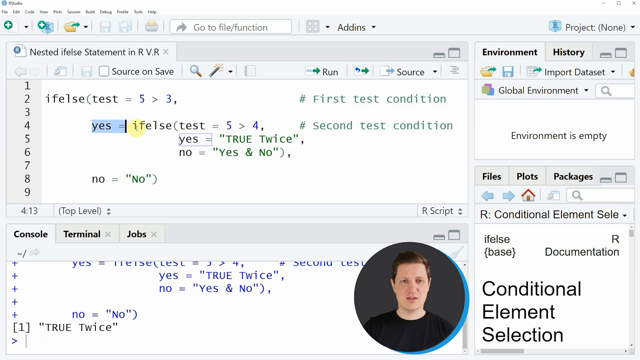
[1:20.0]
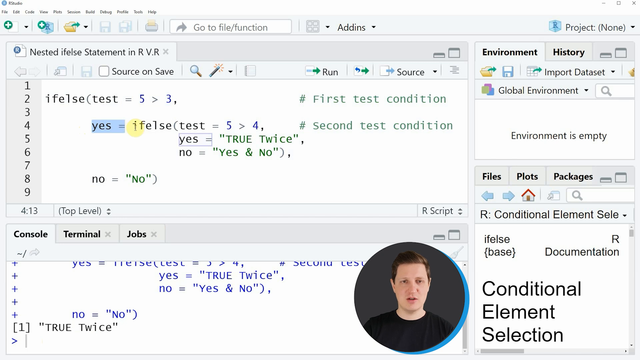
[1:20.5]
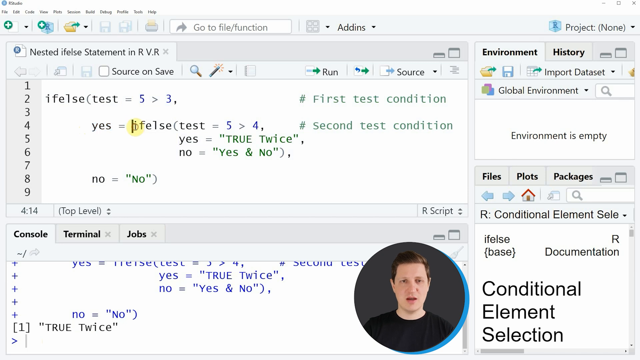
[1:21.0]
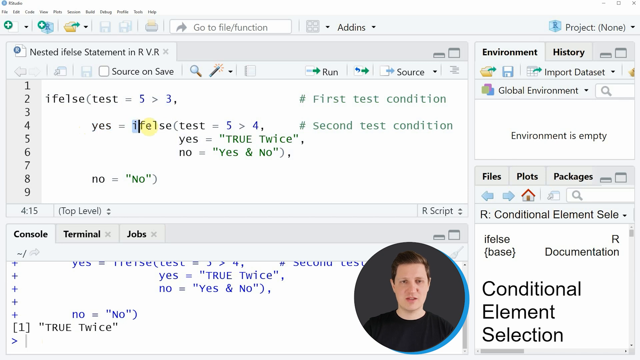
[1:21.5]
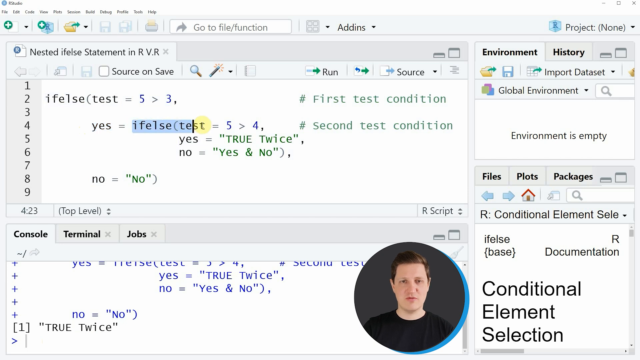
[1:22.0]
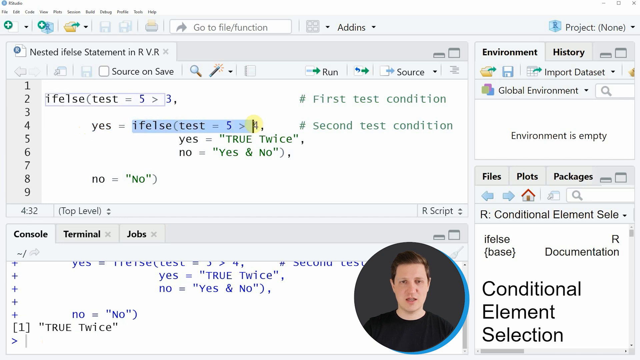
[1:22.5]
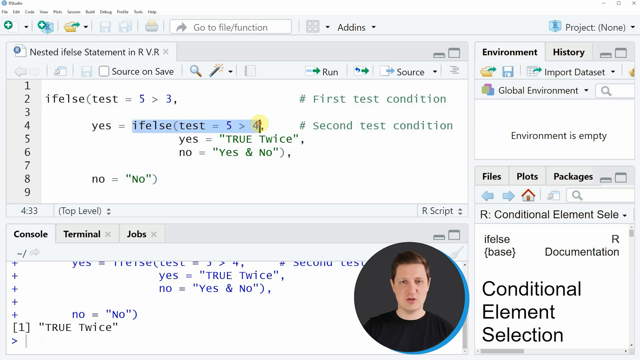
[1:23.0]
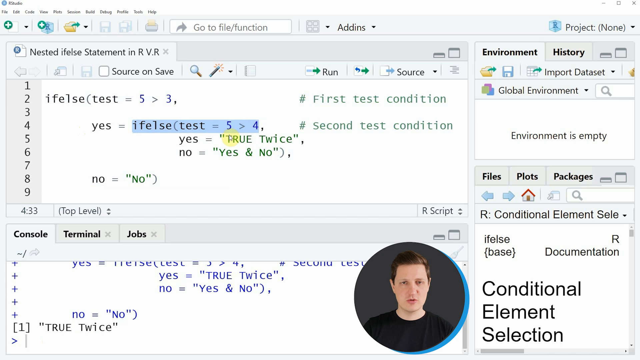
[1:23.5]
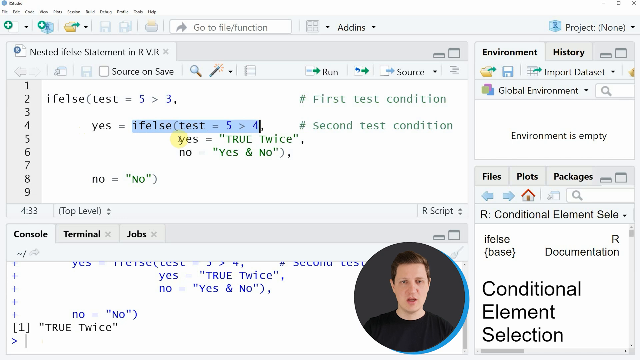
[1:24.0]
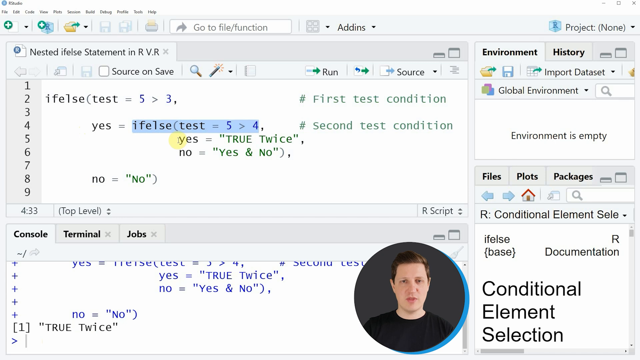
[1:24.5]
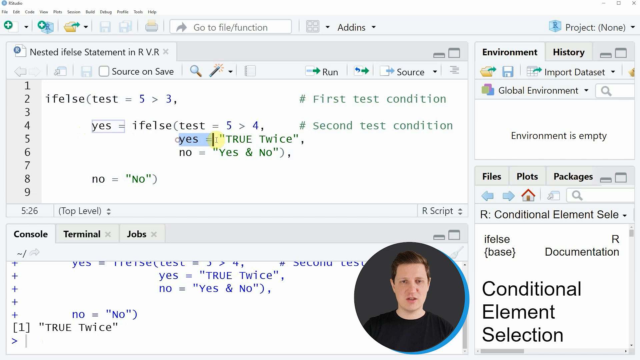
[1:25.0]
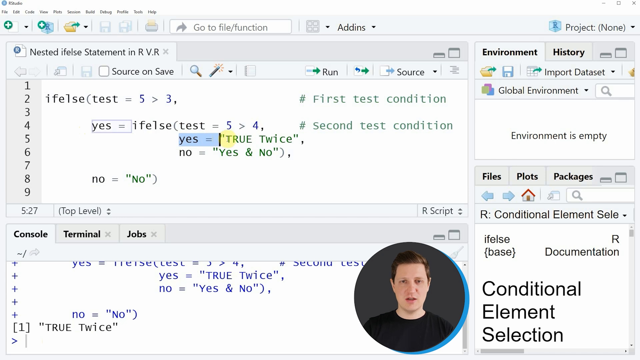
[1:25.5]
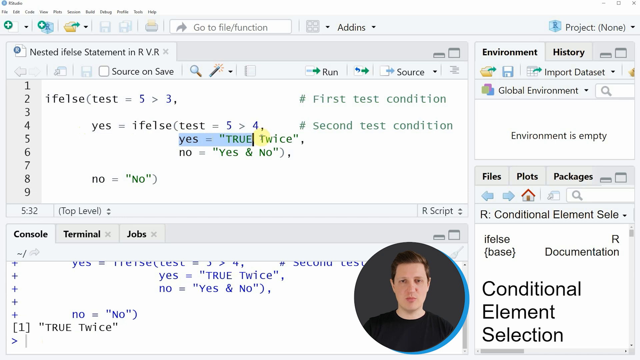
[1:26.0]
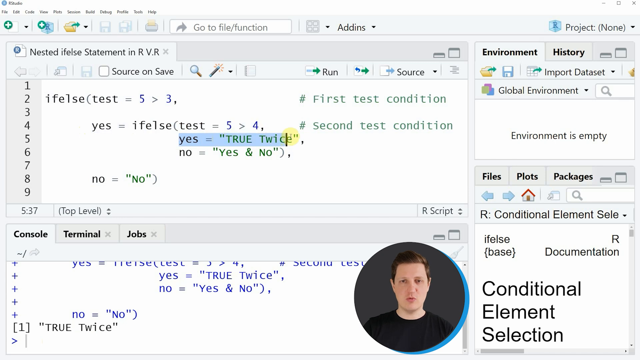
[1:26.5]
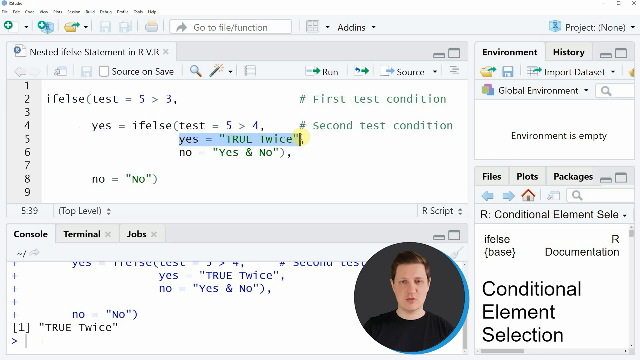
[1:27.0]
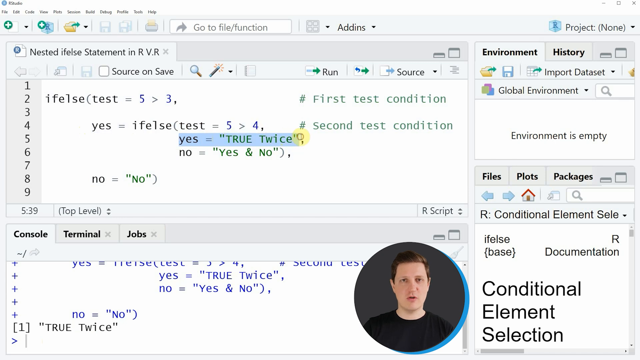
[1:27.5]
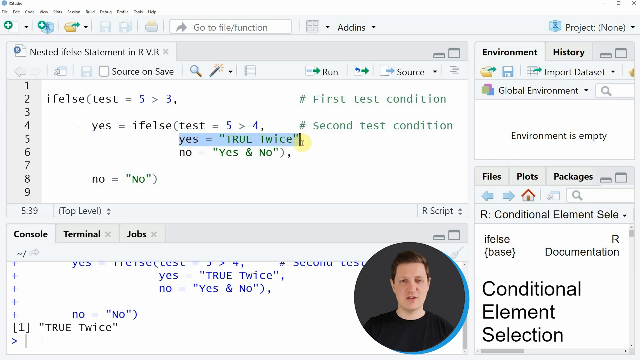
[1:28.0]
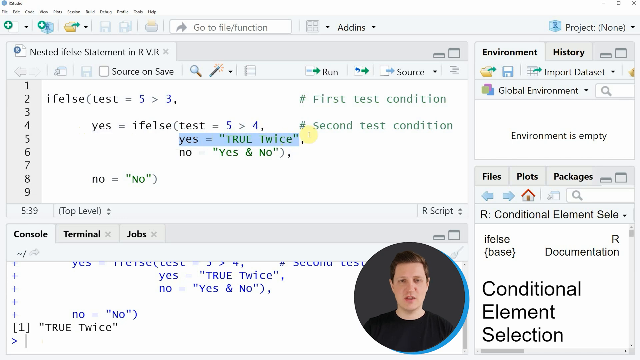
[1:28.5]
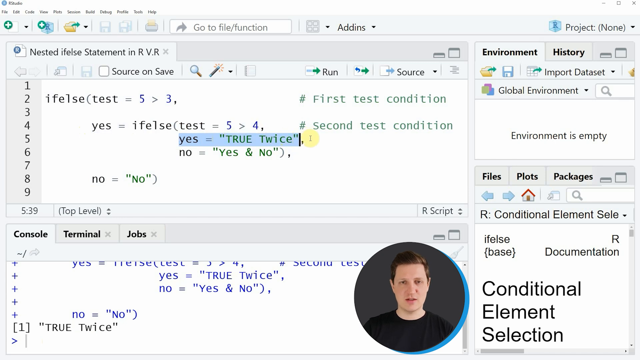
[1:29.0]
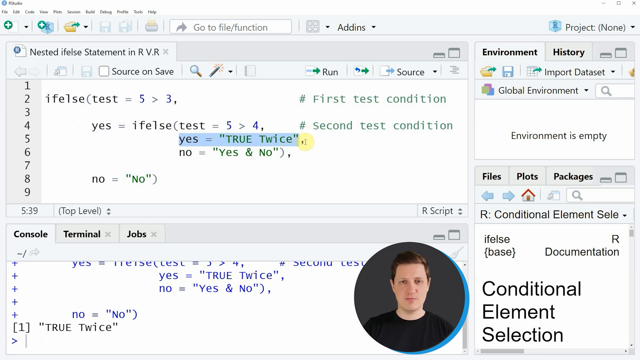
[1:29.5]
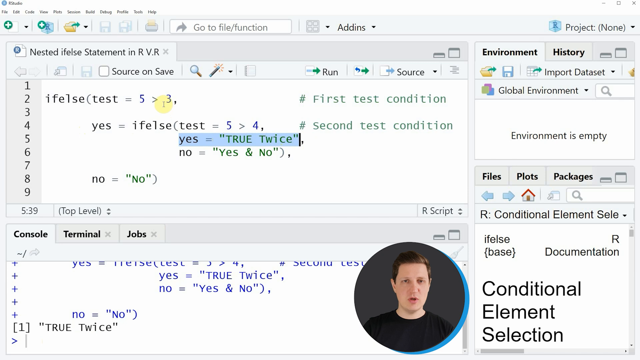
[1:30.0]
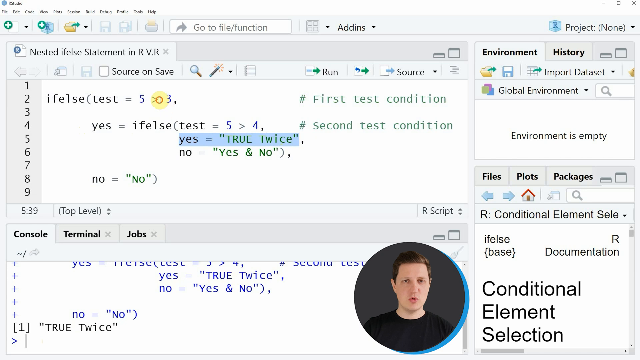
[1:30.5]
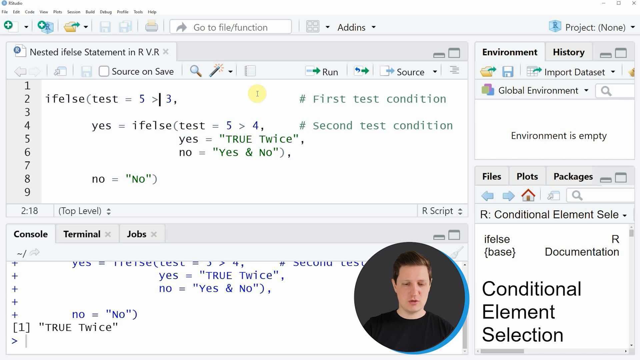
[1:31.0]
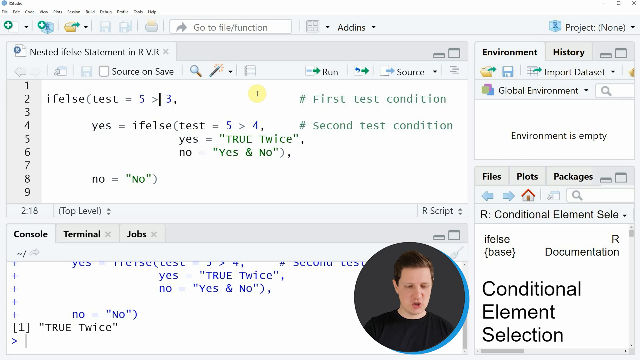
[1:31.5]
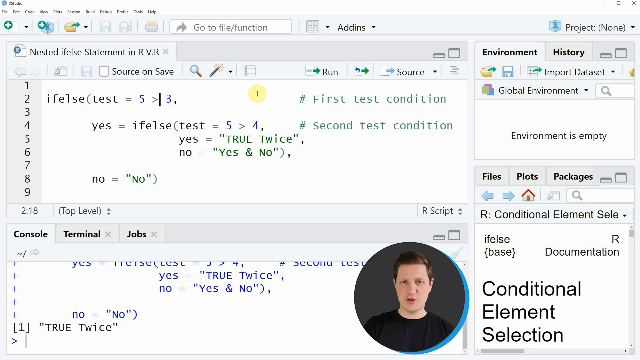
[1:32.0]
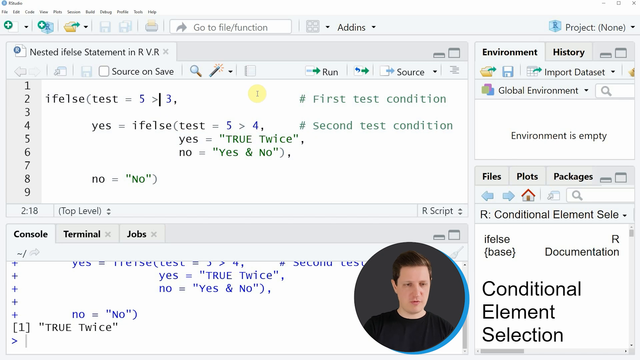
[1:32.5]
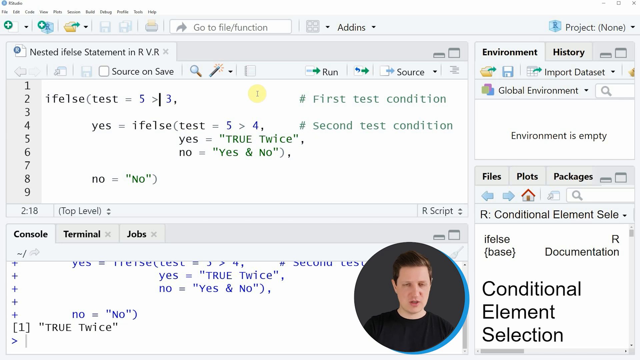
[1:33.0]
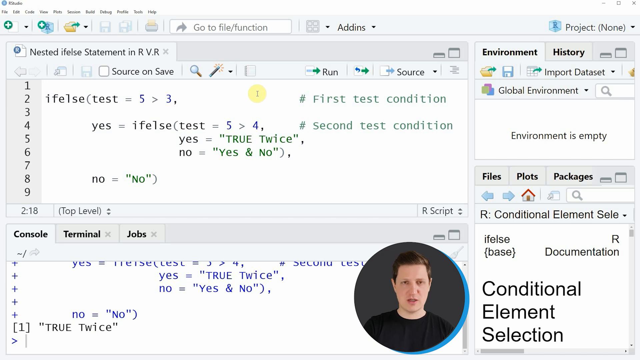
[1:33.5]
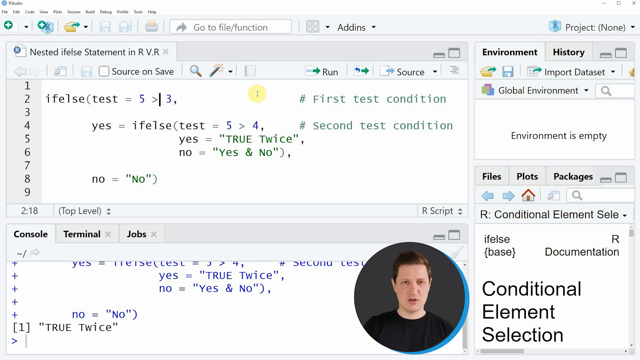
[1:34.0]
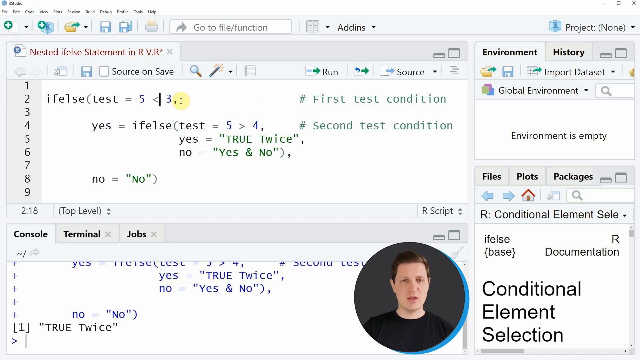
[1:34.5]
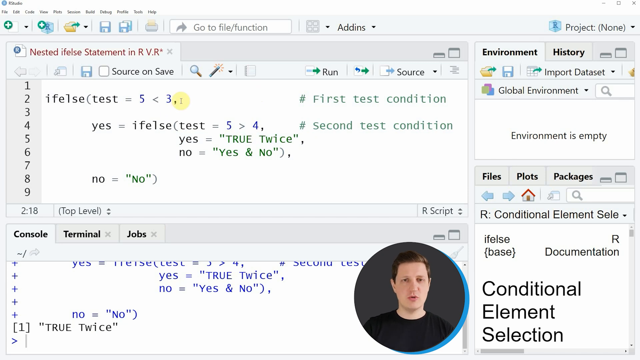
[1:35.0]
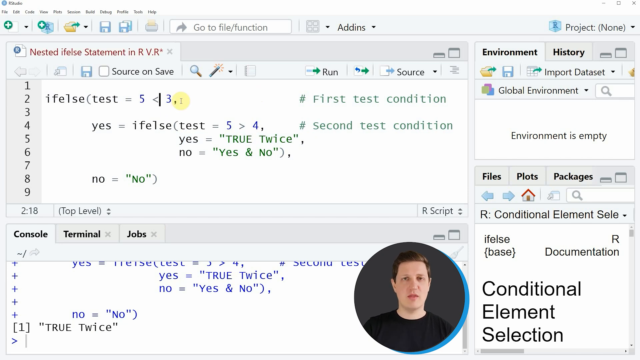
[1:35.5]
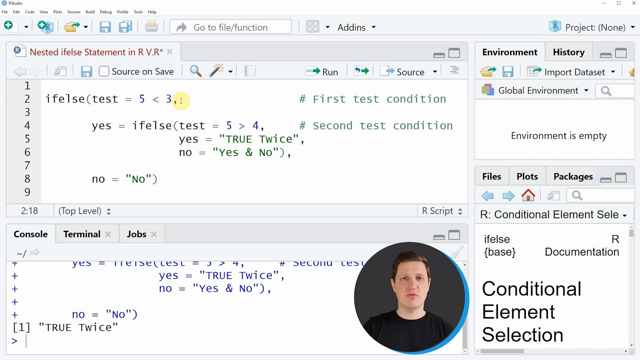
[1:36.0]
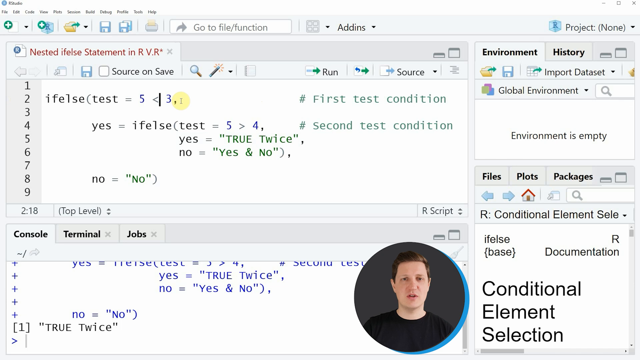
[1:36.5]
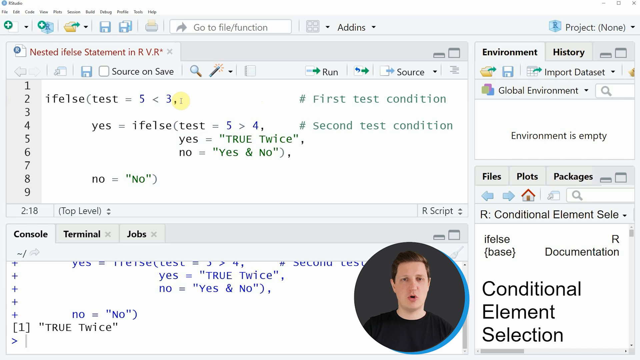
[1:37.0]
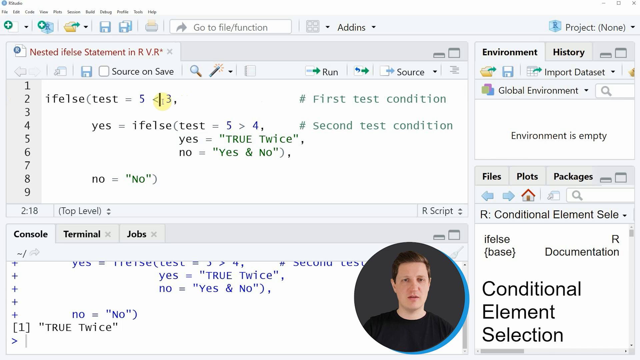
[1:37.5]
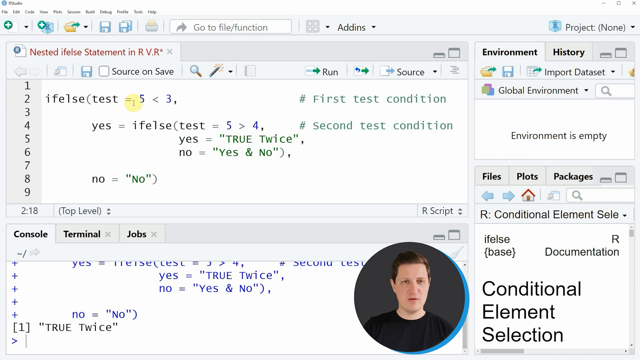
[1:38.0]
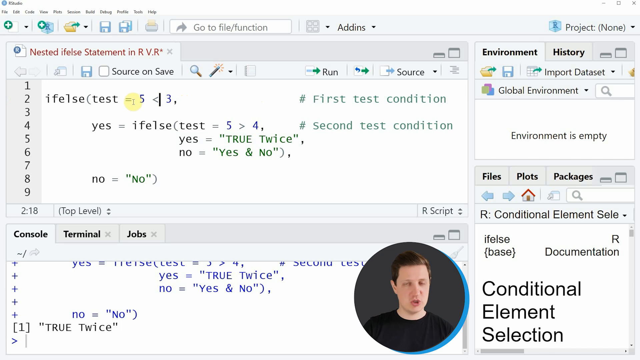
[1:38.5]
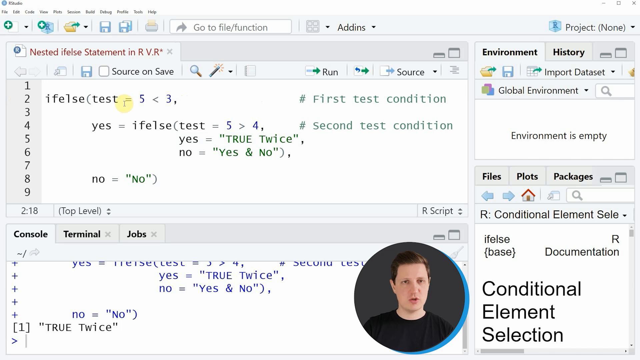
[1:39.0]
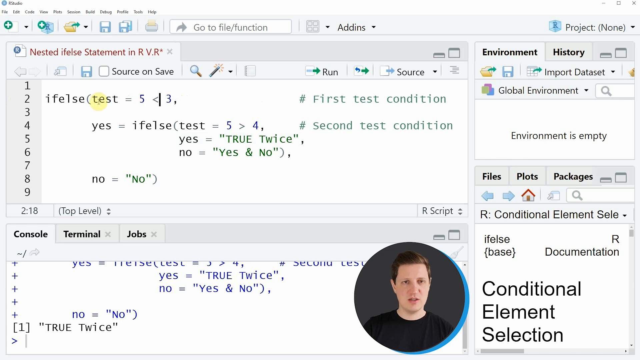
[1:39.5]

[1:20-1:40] In the top nested ifelse statement panel, the text "yes =" at the beginning of line 4 is highlighted in blue. The cursor selects the text "ifelse(test = 5 > 4", then goes down to line 5 and highlights the text yes = "true twice", with "true twice" in quotation marks. The cursor is then clicked on line 2 after the greater-than sign, and the man takes a moment to give a bit of commentary on what is being worked on. His video is in a circle frame at the bottom of the screen: he is a Caucasian man with light brown hair wearing a black shirt, in front of a dark grey background, seen from his chest to the top of his head. He doesn't really show any emotion as he speaks.